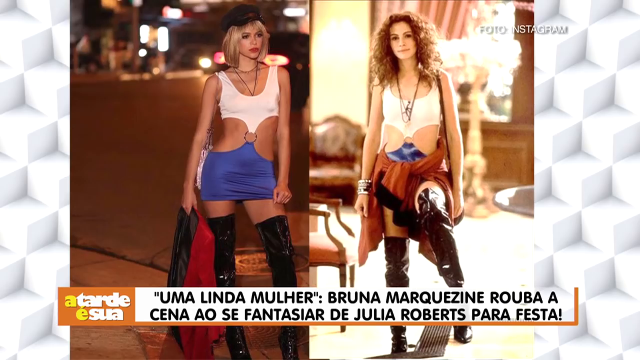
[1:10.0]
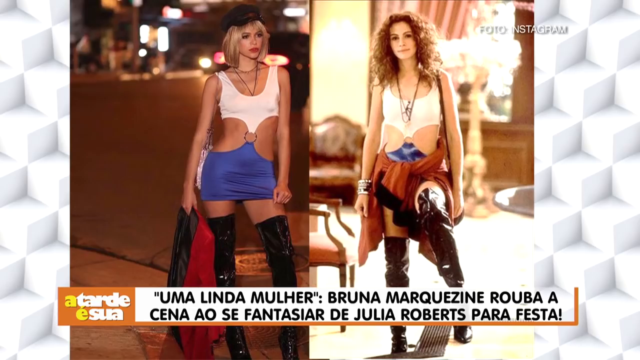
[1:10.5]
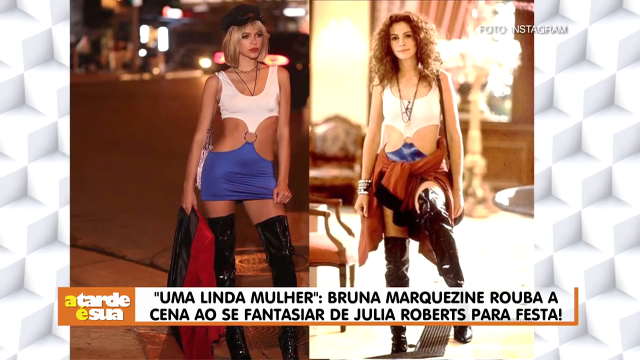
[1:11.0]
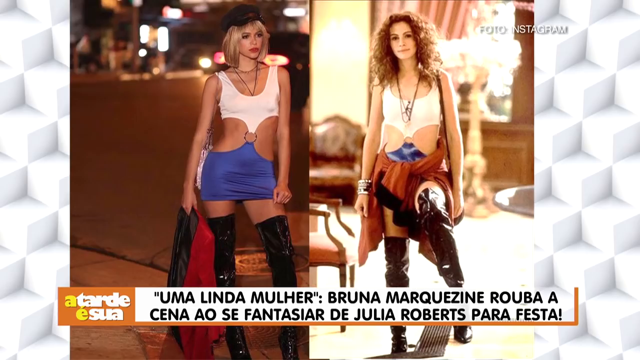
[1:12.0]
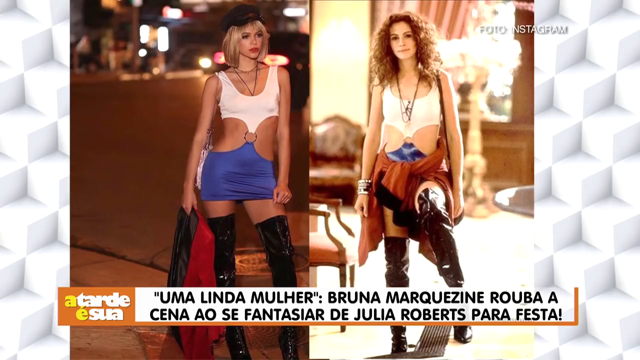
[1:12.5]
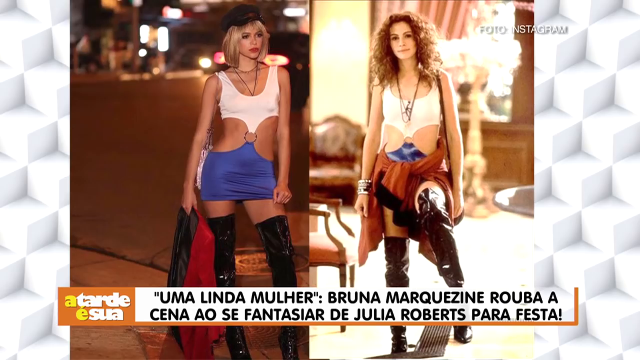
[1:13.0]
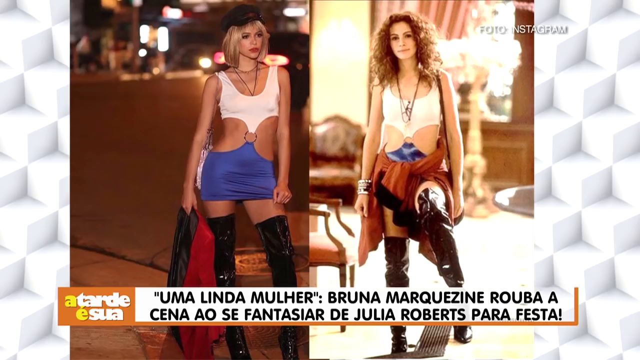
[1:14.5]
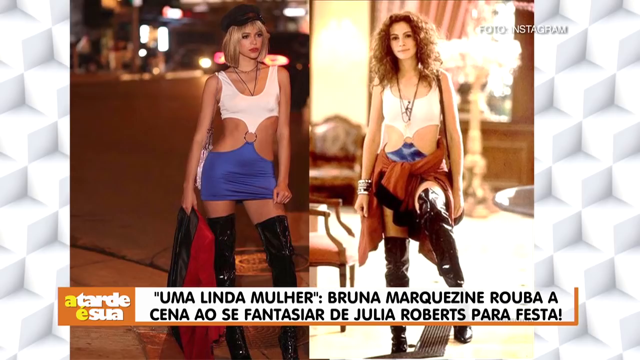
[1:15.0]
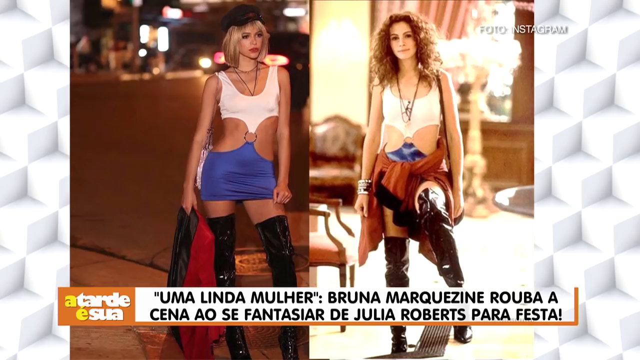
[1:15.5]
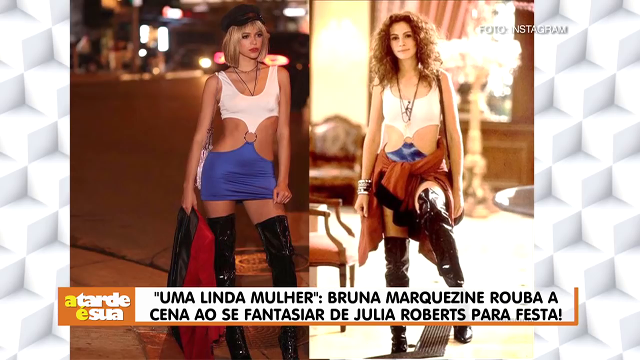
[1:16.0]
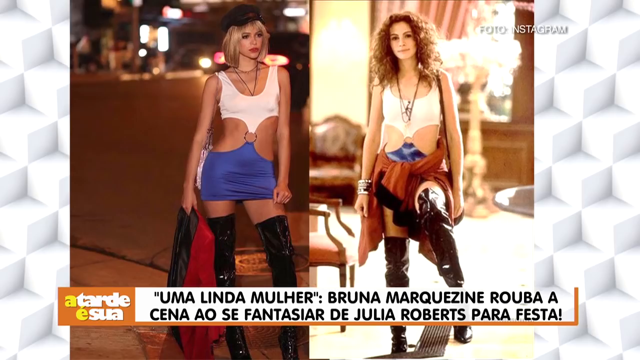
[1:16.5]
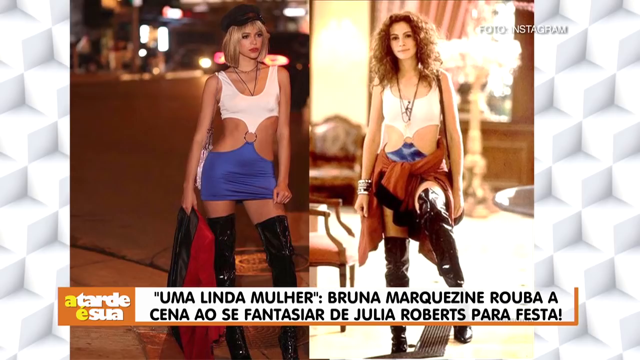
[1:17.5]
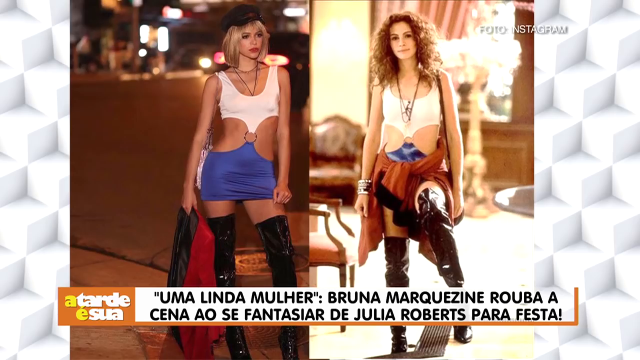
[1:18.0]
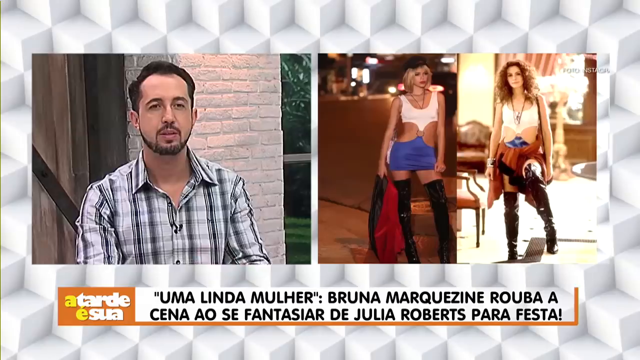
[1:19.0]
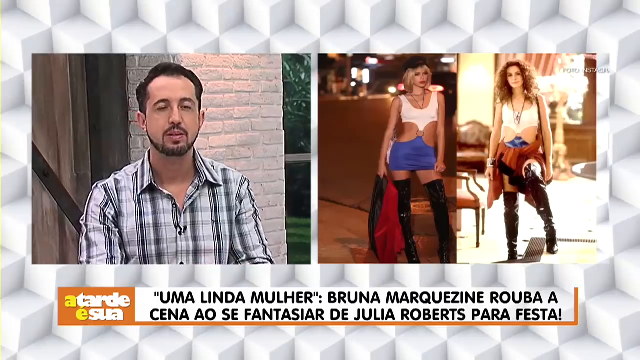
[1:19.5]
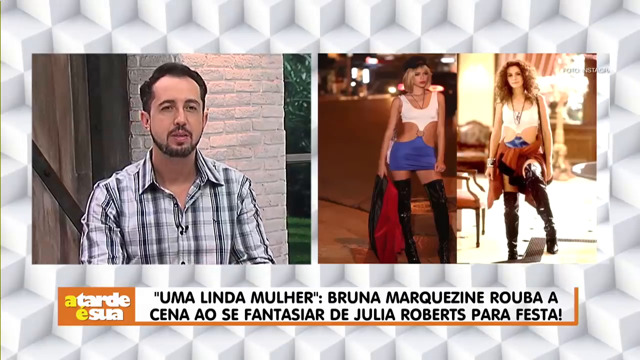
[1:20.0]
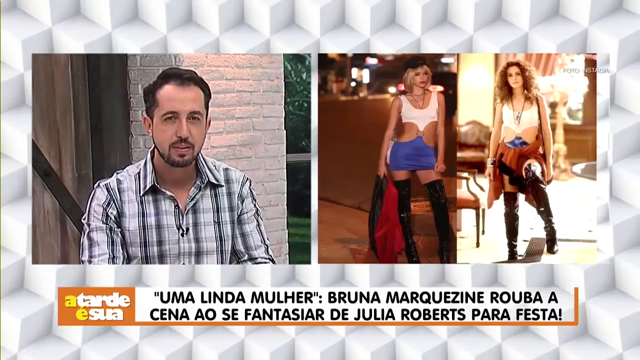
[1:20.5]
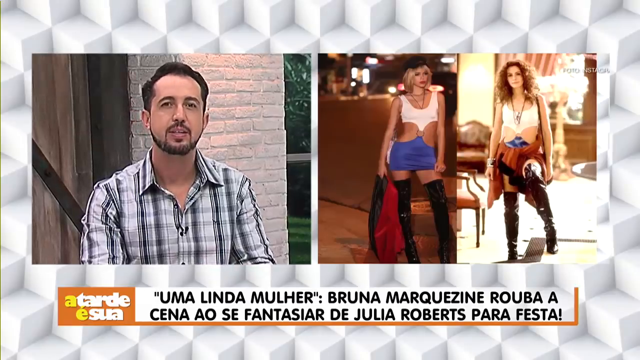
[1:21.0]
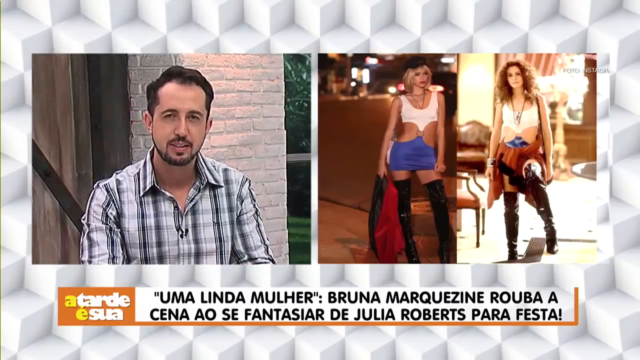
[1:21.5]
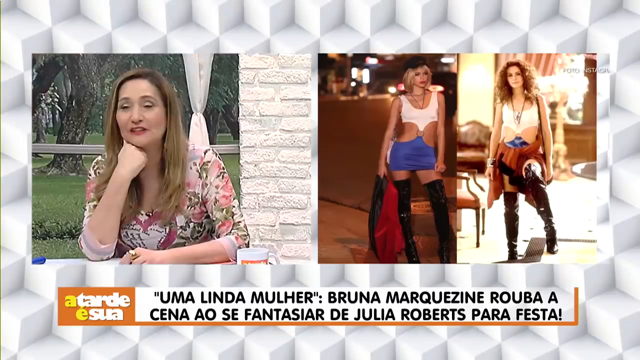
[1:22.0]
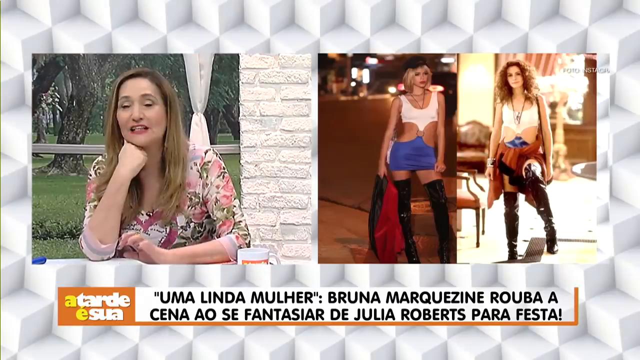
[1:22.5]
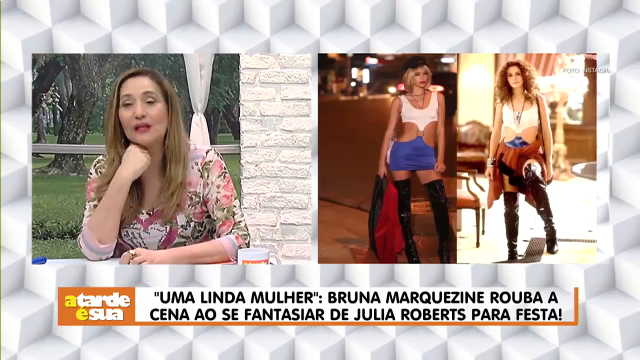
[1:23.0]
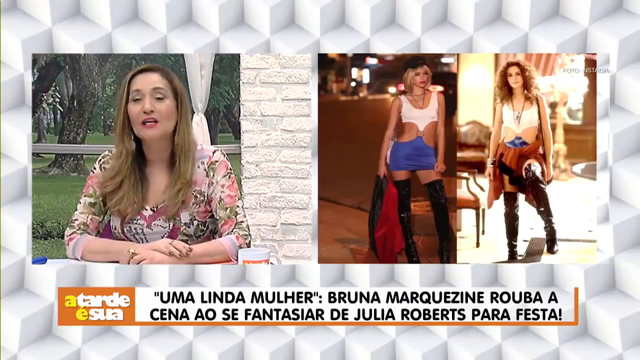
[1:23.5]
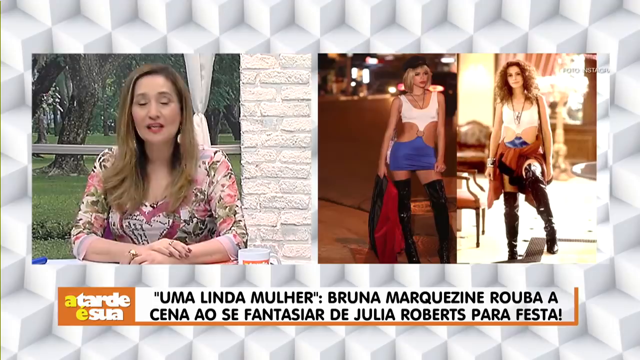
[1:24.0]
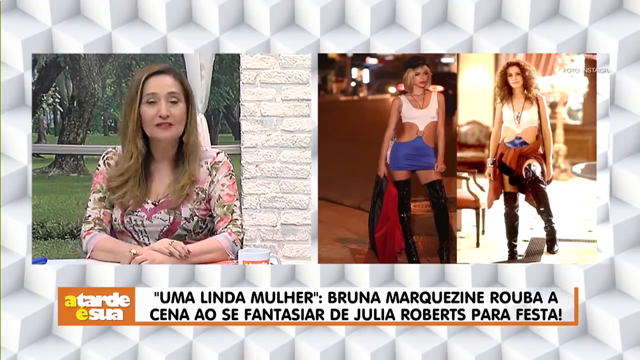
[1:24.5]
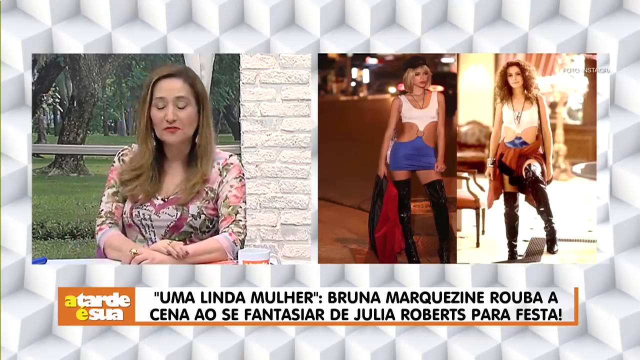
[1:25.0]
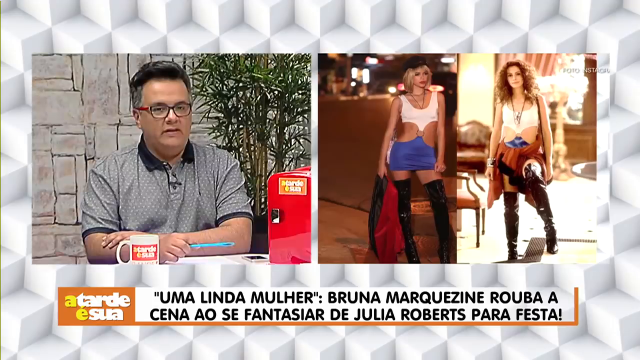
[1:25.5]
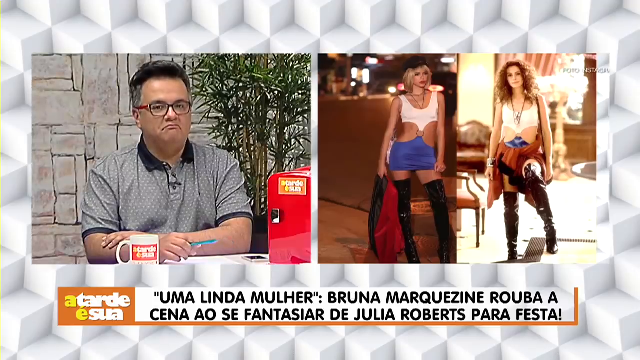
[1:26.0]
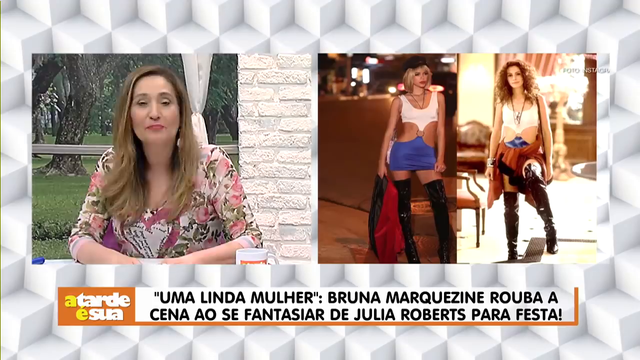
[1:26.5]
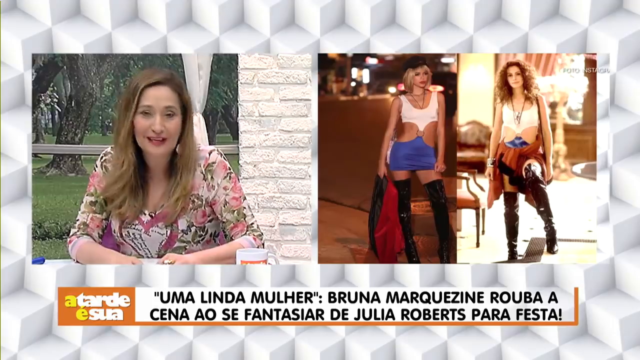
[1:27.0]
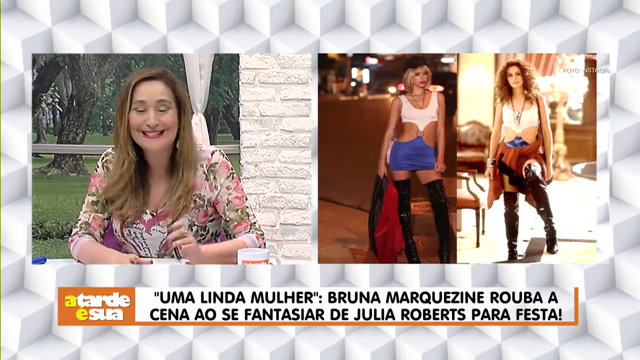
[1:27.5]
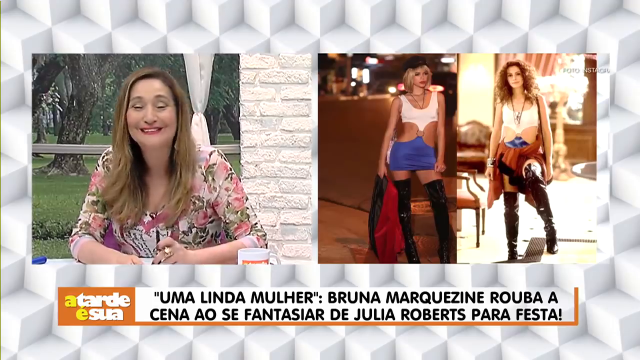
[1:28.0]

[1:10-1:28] The close-up of the Julia Roberts imposter next to the actual Julia Roberts from Pretty Woman remains on screen, with text at the bottom still including "Linda Mueller" and "Julia Roberts", and not much else happens. The split screen returns, showing the man with the beard, mustache, stripy-looking shirt and black hair talking and nodding. The woman in the floral print dress rests her chin on her right fist as she talks, then puts her arm down, crosses her arms, keeps talking and nods. The man in the gray shirt with black accents, kind of pompadour black hair and glasses holds his pen parallel, one arm touching the other, nods, and makes a gesture or almost a grimace with his face. The woman in the floral print dress talks, smiles and pokes her pen on the table.